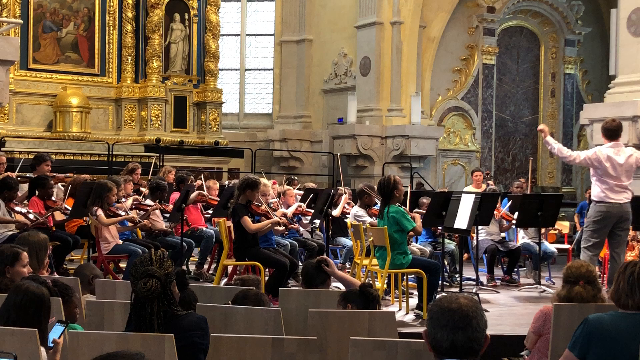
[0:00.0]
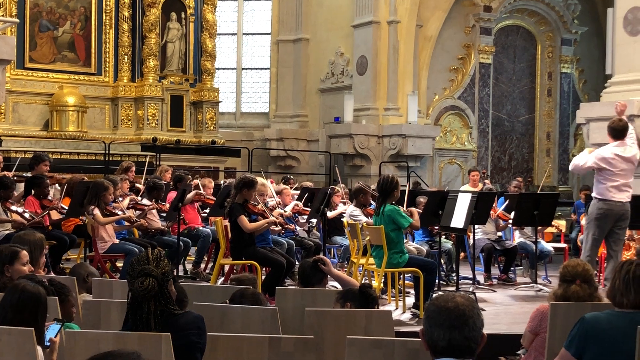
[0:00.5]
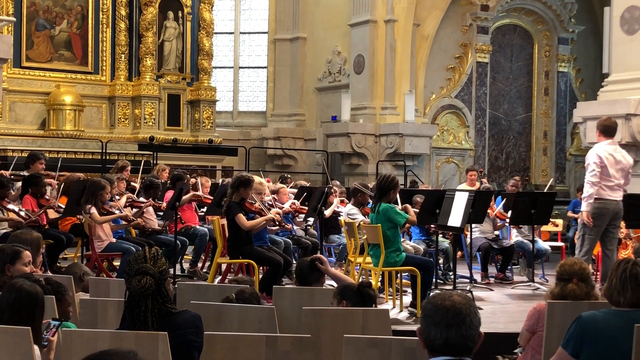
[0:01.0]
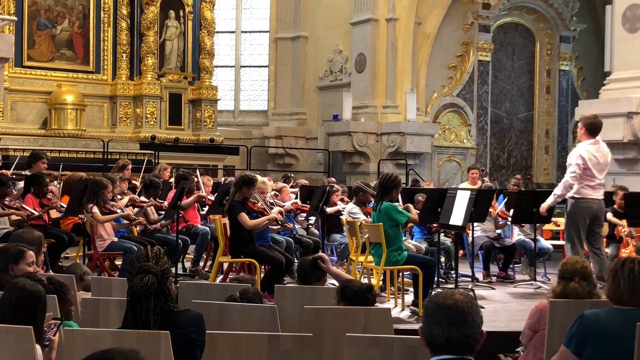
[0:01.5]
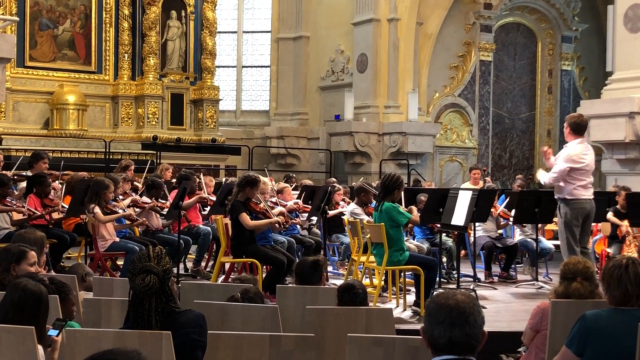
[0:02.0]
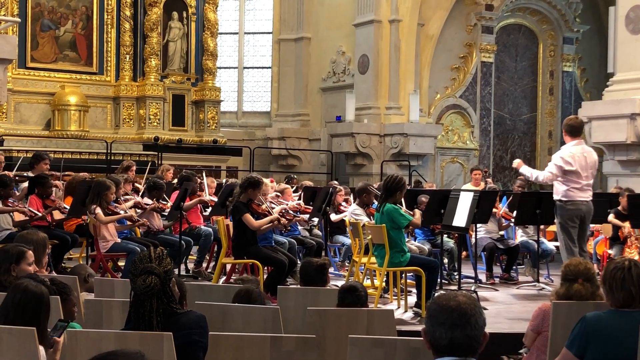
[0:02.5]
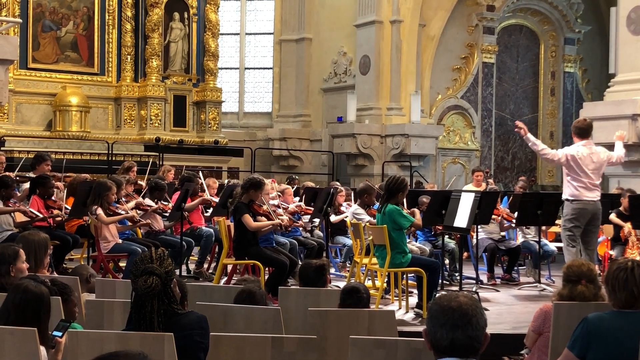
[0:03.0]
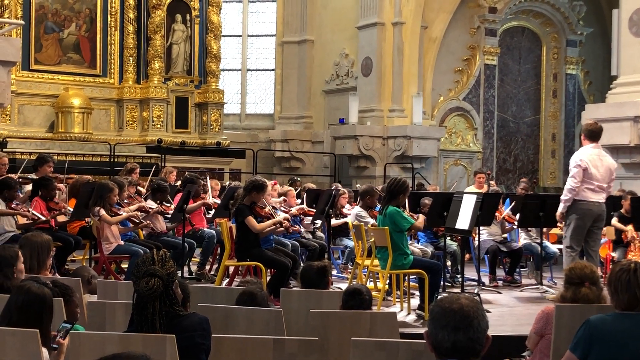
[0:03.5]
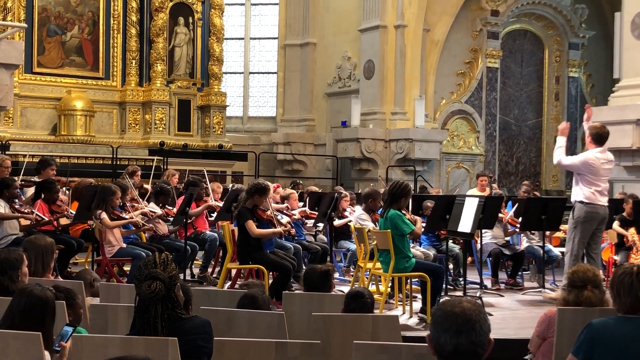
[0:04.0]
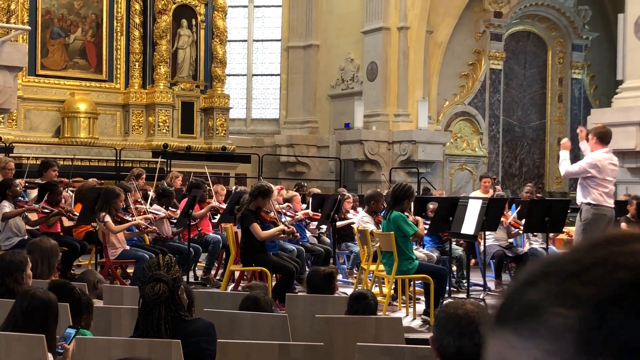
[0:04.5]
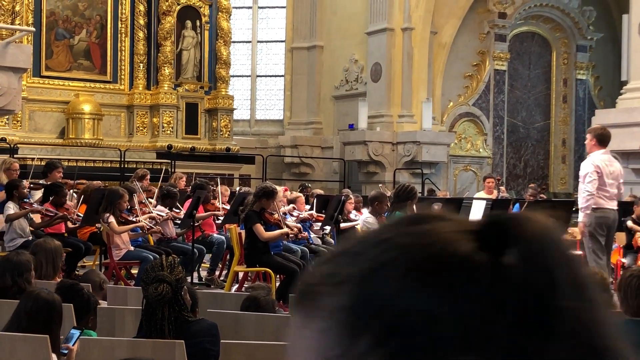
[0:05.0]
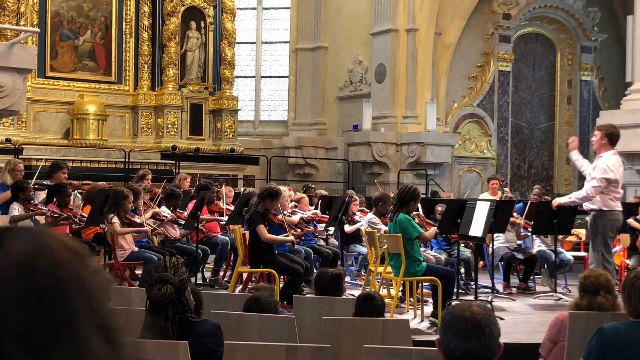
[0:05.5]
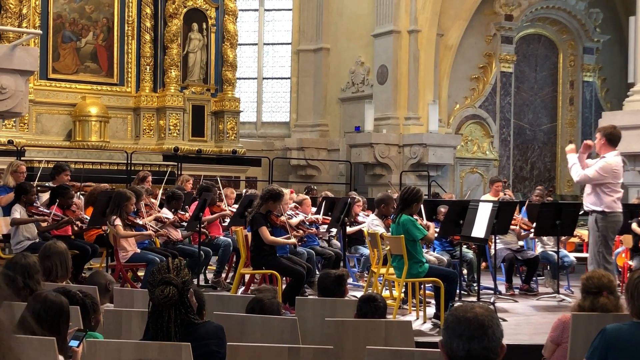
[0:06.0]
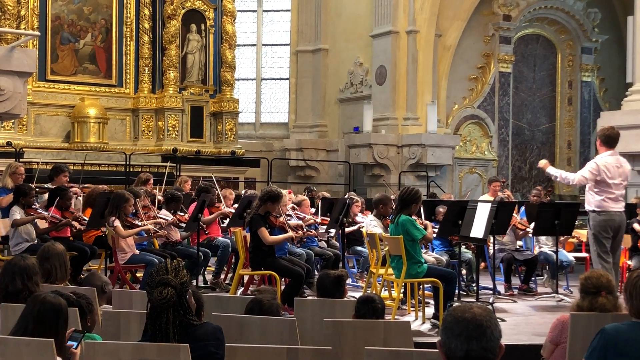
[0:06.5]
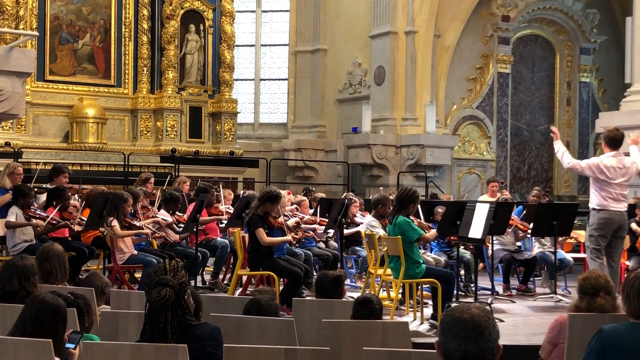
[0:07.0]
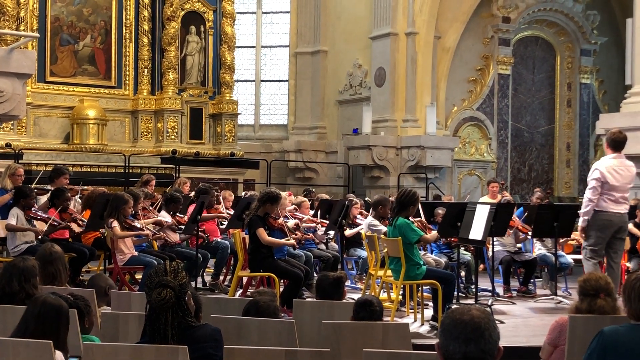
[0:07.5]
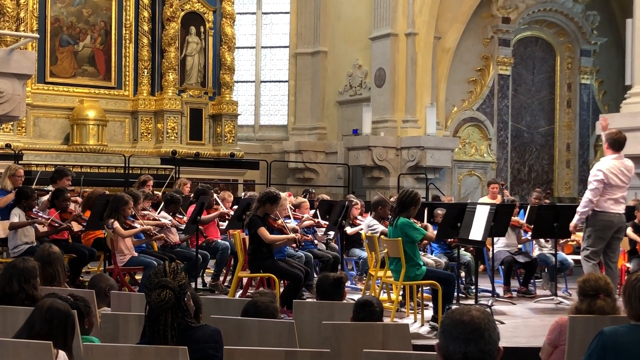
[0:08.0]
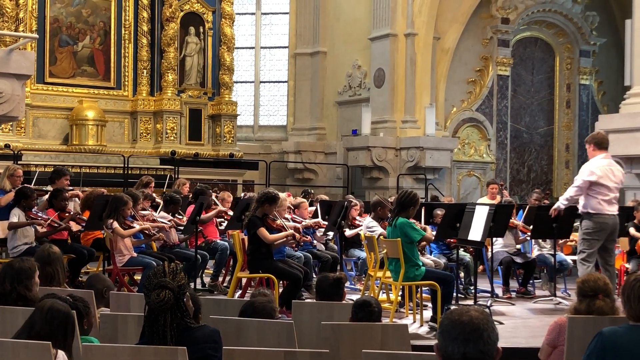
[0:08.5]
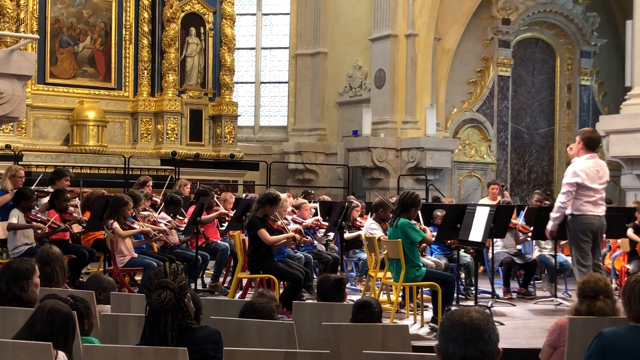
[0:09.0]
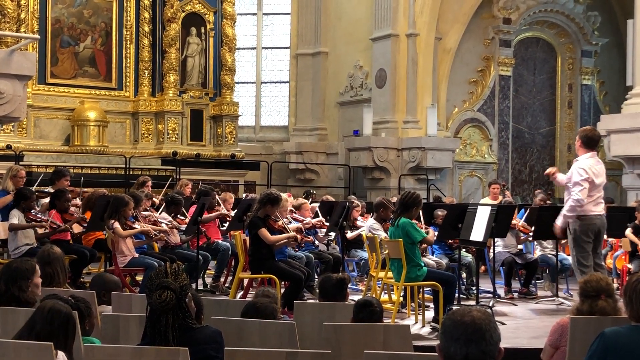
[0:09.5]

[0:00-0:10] A group of musicians performs in what looks like a church; it appears to be a rehearsal, since everyone is wearing different clothes. The conductor wears slacks and a white shirt, and everyone seems to be in street clothes. The musicians are seen from the side. There are females, and mainly violinists, with apparently a piano player in the background as well. There are a lot of music stands, and empty chairs in the foreground. The conductor, on the right-hand side, is leading. The walls show a lot of stone and ornate designs, a lot of gold and a brilliant painting, and there appears to be a statue of sorts. Much of the setting is gray, dark gray and gold. The backs of the chairs in the foreground look gray, and the stage looks gray.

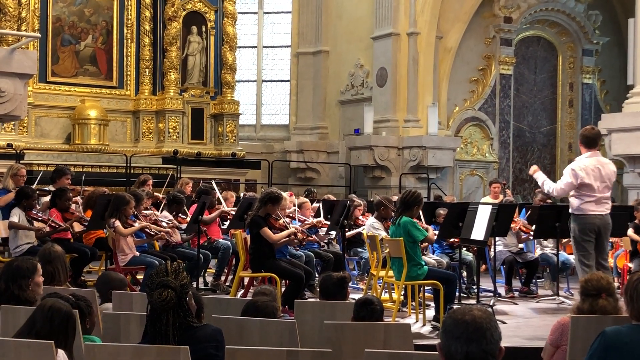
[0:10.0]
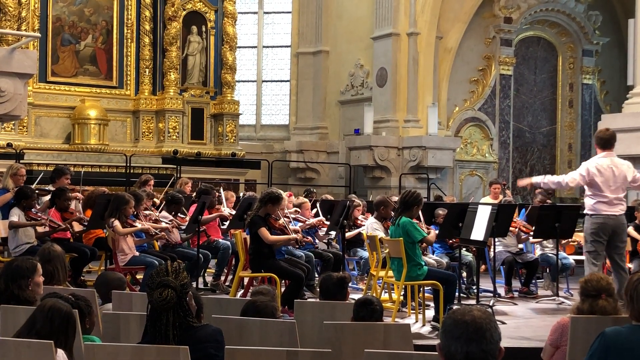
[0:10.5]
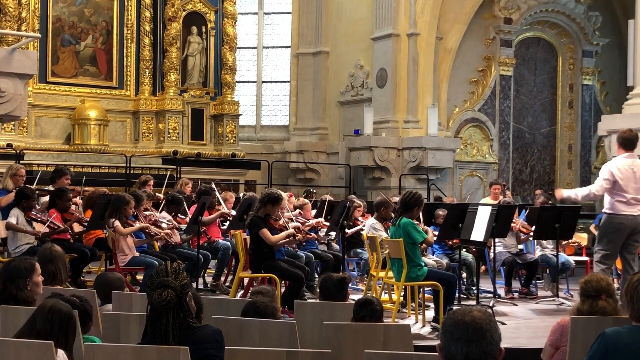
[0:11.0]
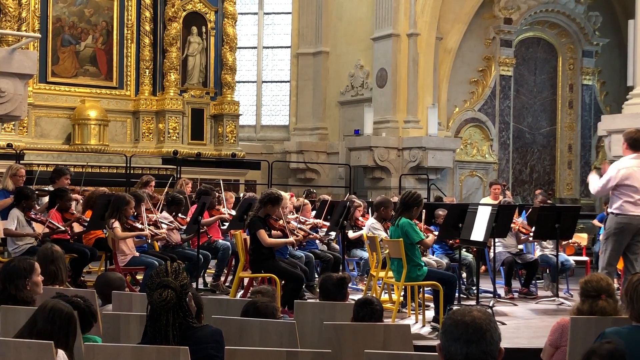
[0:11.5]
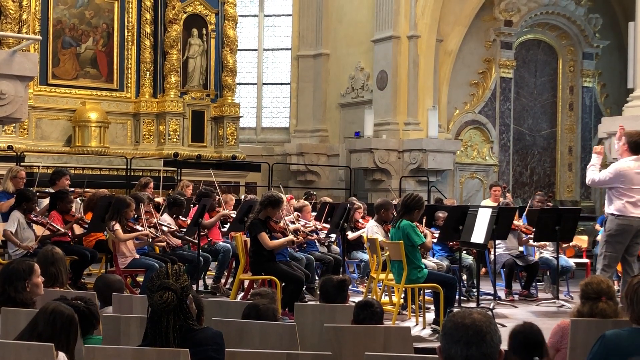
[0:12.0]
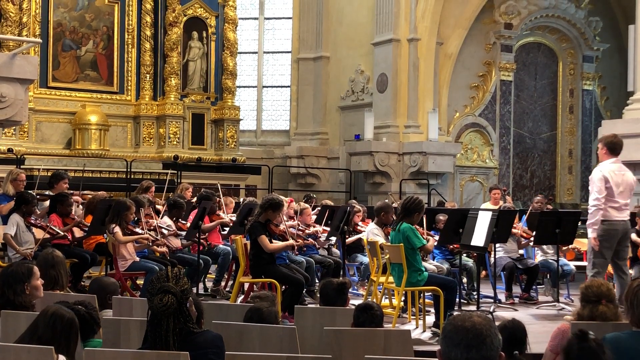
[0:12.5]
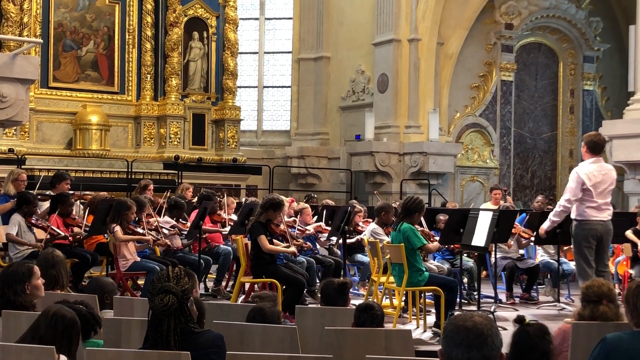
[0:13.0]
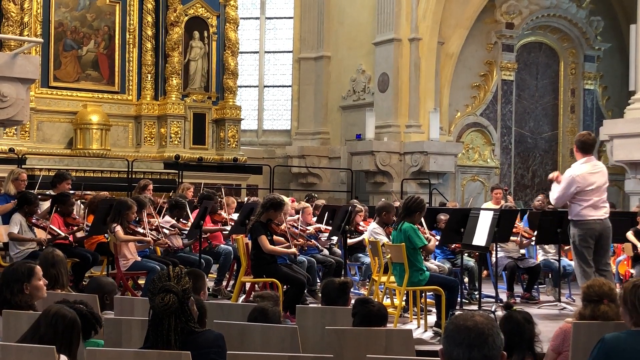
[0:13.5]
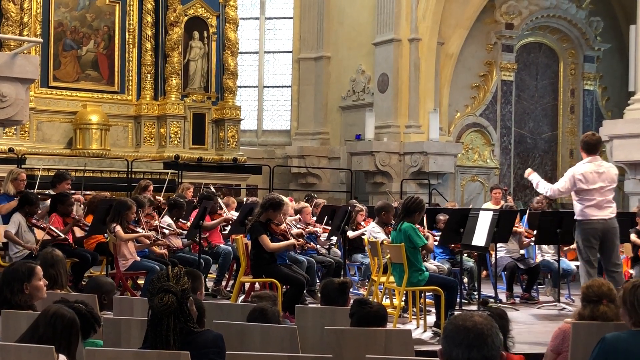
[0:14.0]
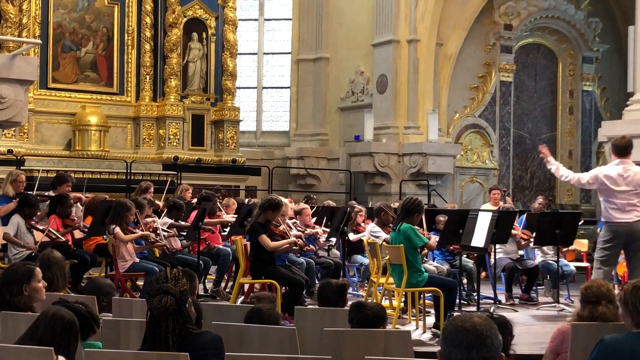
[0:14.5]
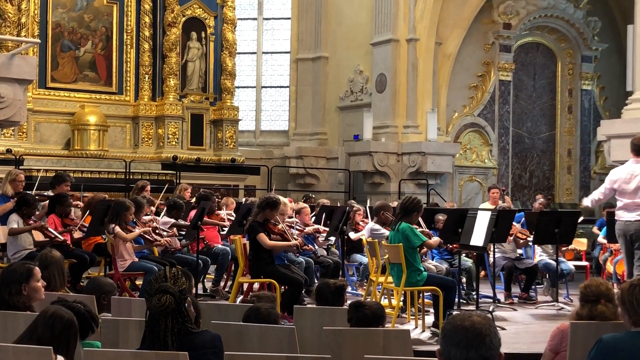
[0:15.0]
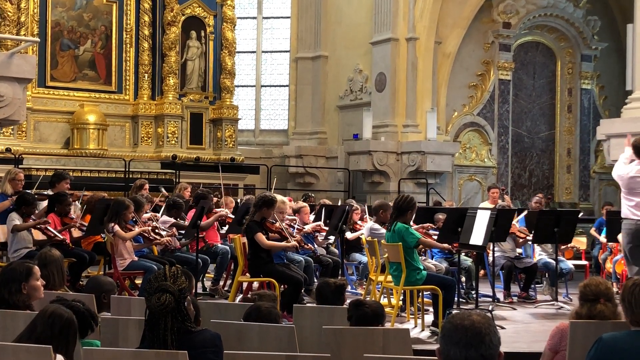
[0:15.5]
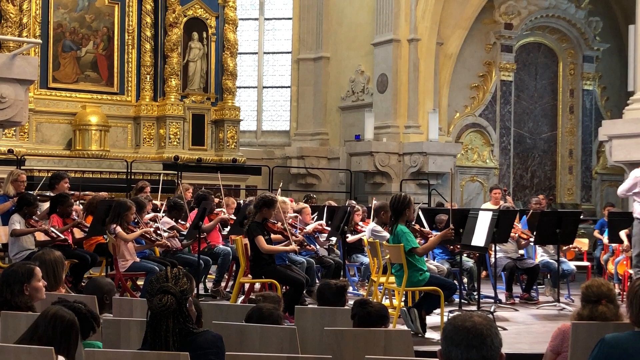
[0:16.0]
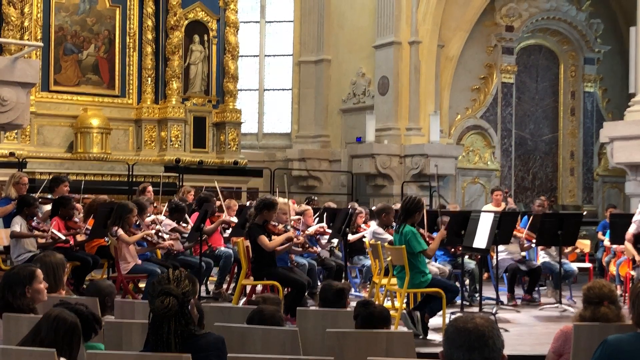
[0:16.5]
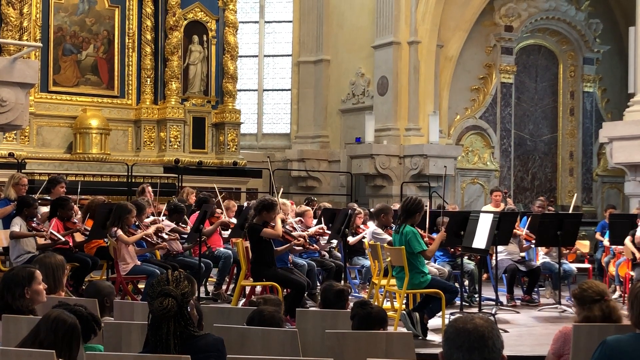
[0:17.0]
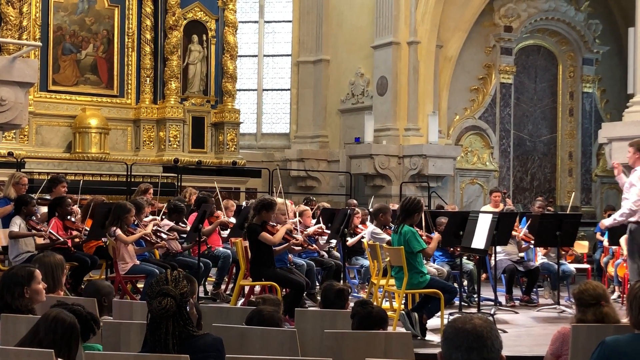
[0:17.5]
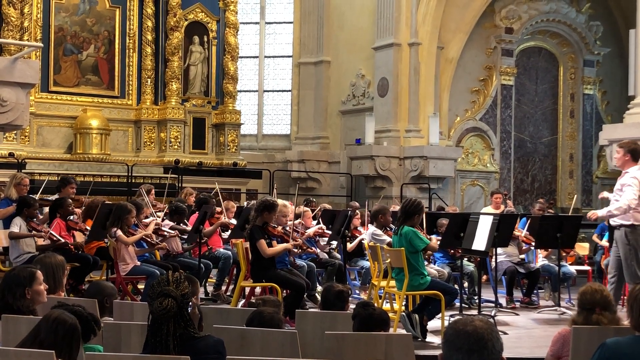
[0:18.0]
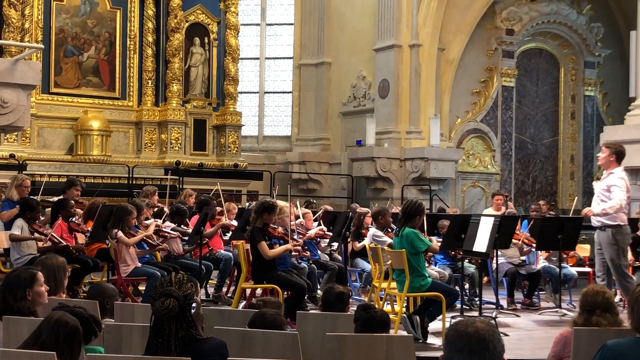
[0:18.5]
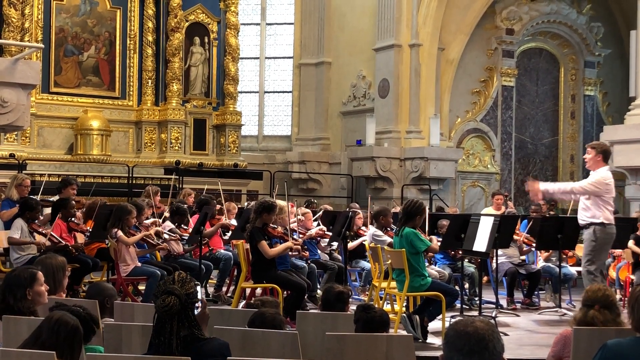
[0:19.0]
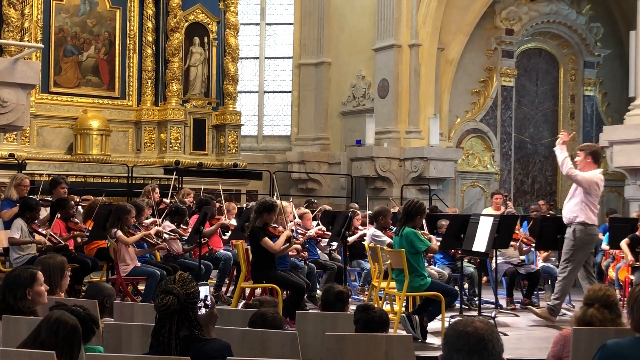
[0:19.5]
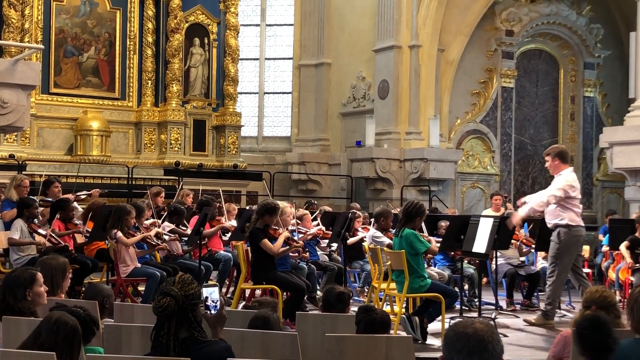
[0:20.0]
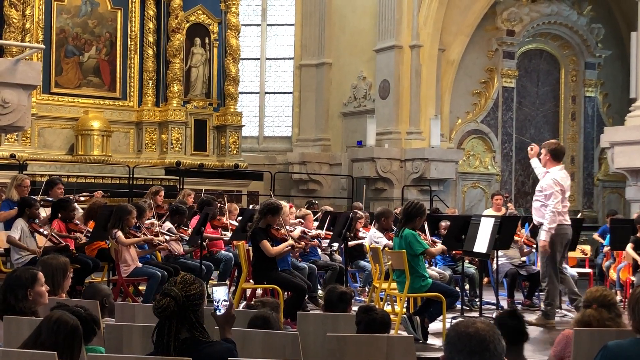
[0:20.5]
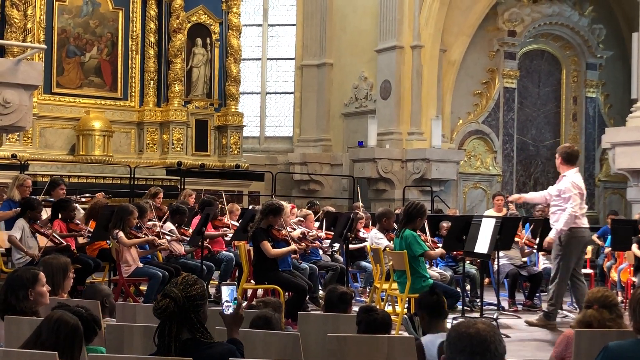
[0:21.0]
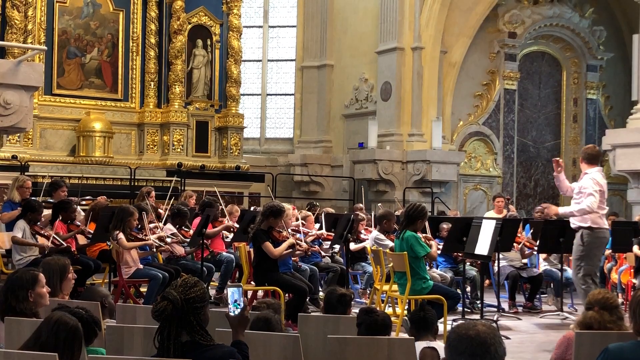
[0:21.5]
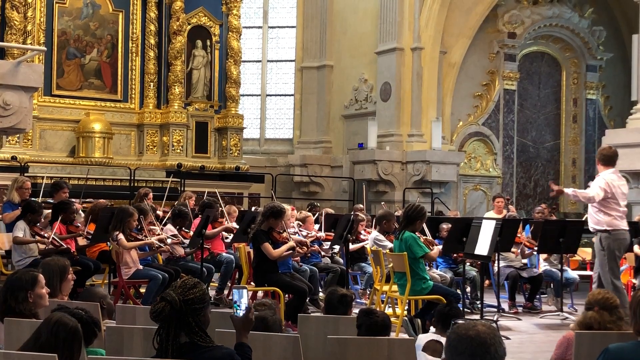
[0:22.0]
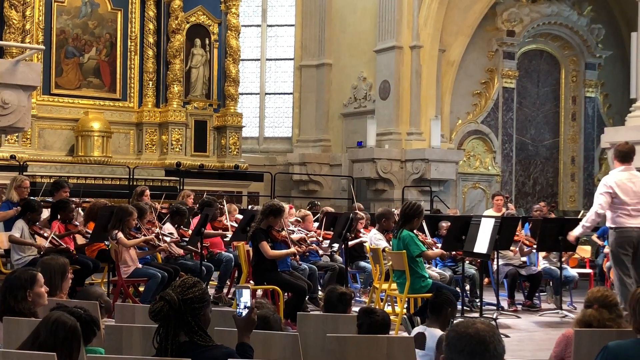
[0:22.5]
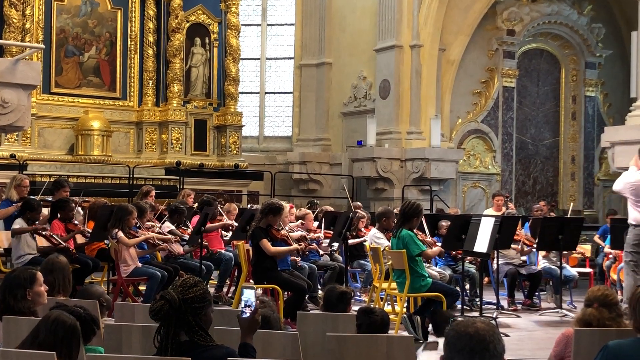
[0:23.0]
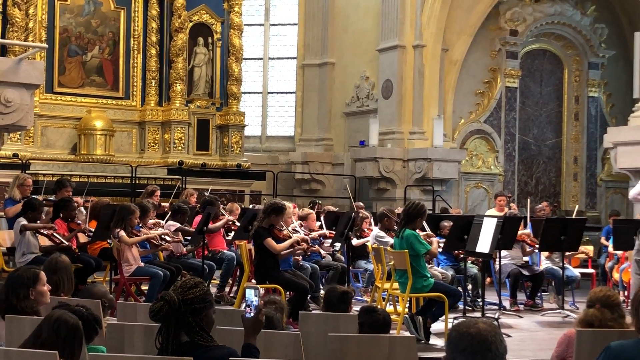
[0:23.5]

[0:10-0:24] From a side view, the conductor continues to conduct in what looks like a rehearsal in a church area. The musicians look younger, maybe teens or students, some sort of student ensemble. Violins are visible, and there are probably other instruments as well, though it is hard to see. There is a piano on stage and a lot of music stands. The conductor is on the right-hand side; the side view of the stage makes it hard to get a good vantage point. The conductor is male, wearing slacks and kind of a white dress shirt.